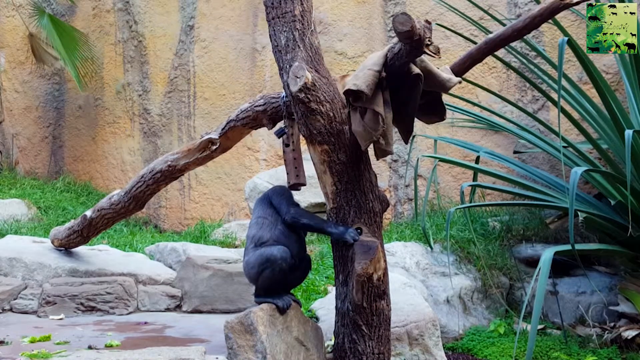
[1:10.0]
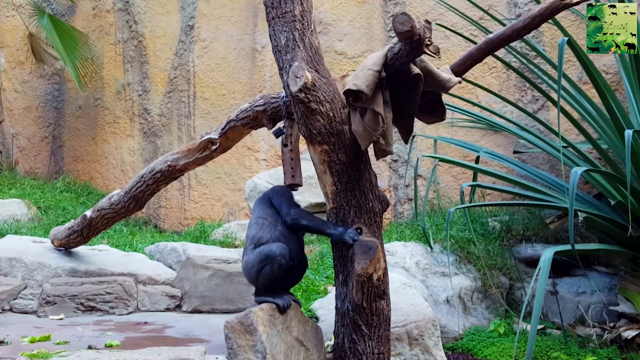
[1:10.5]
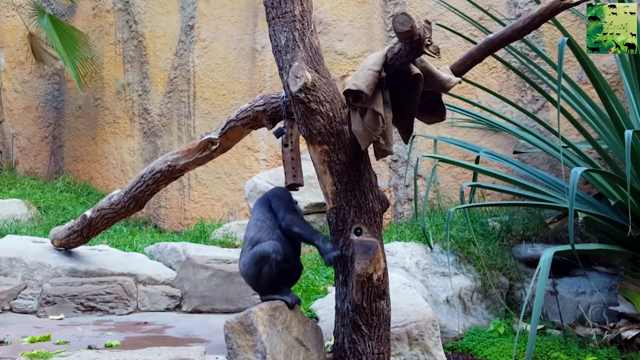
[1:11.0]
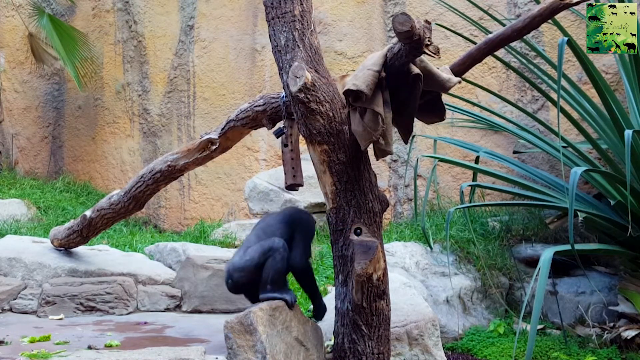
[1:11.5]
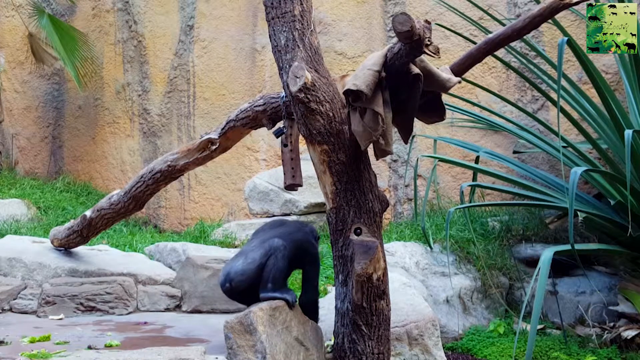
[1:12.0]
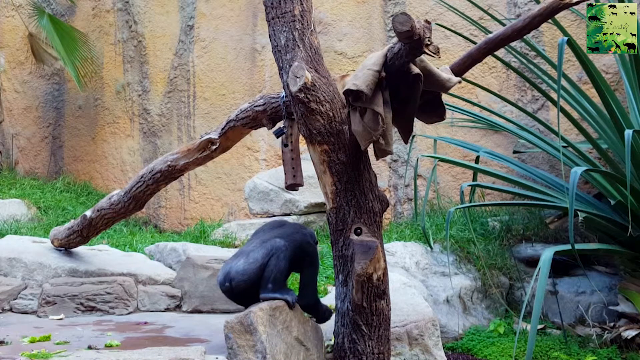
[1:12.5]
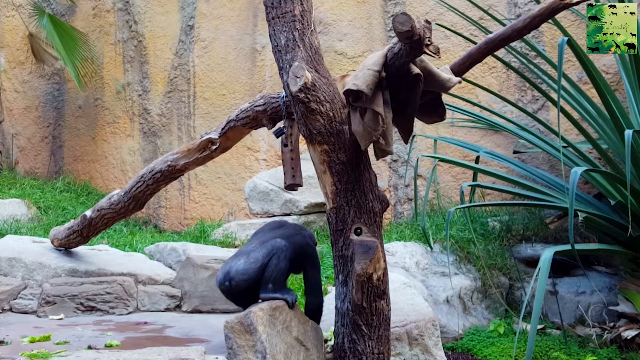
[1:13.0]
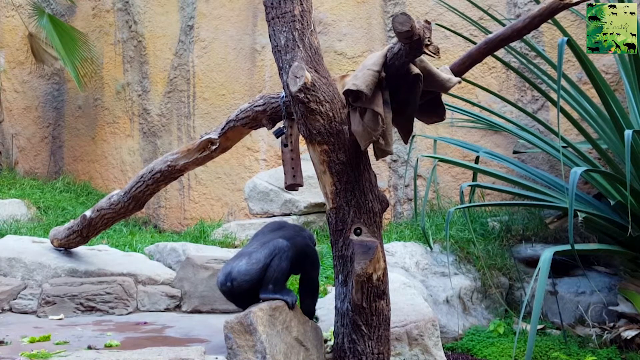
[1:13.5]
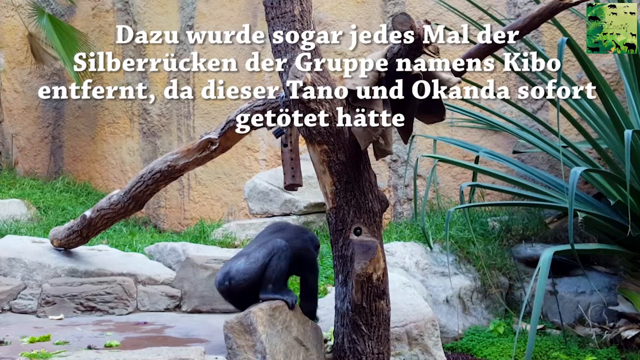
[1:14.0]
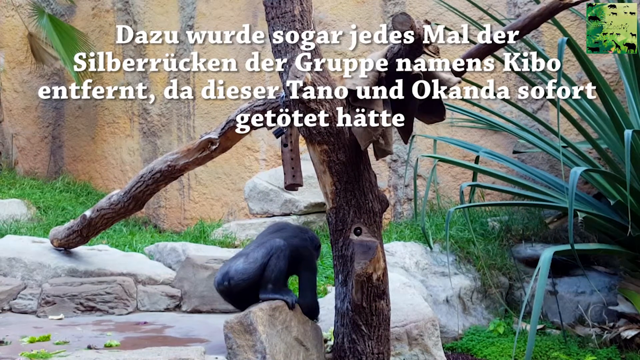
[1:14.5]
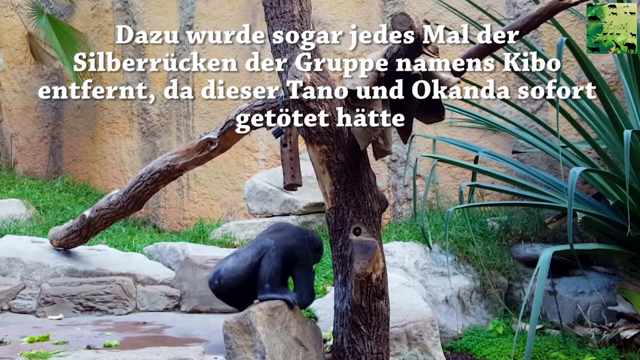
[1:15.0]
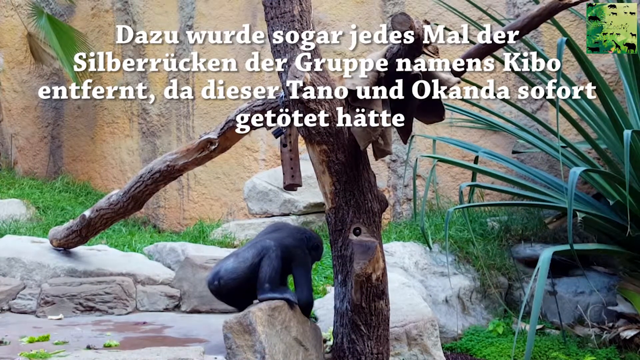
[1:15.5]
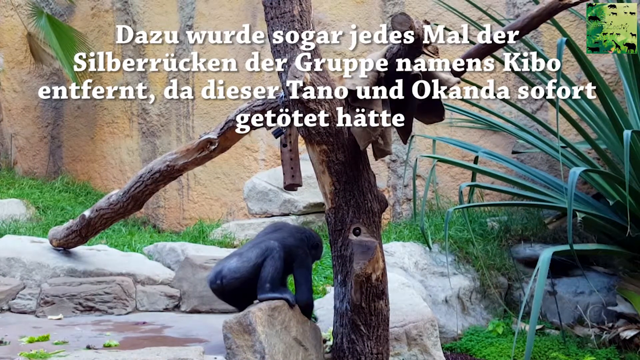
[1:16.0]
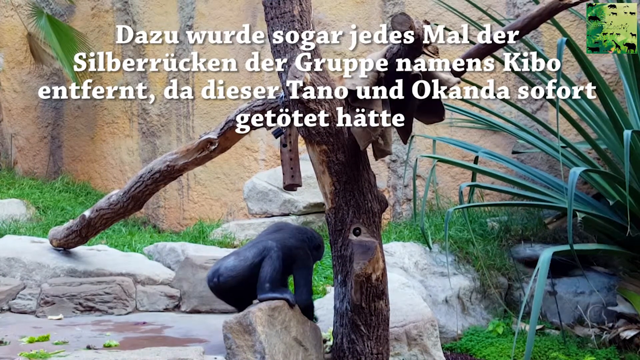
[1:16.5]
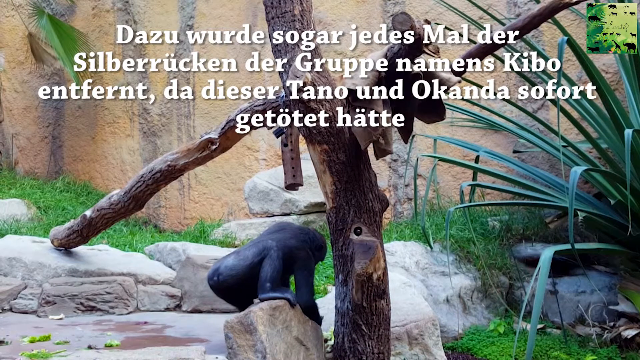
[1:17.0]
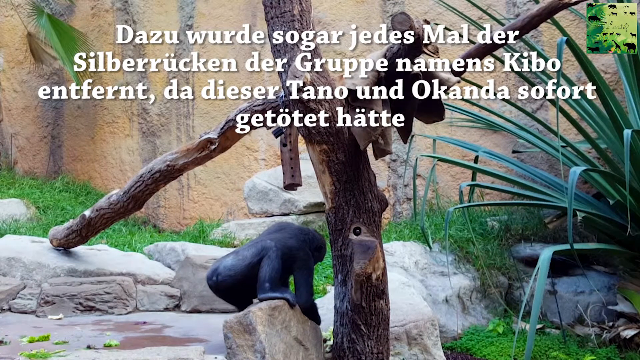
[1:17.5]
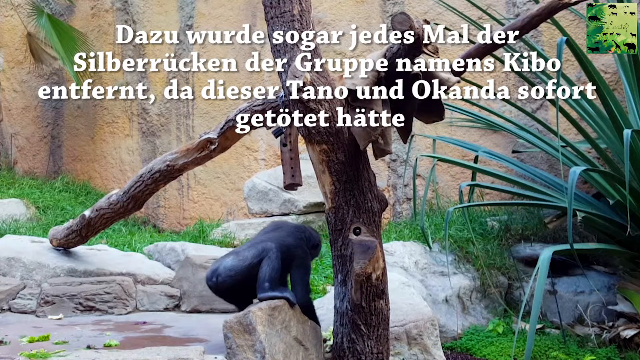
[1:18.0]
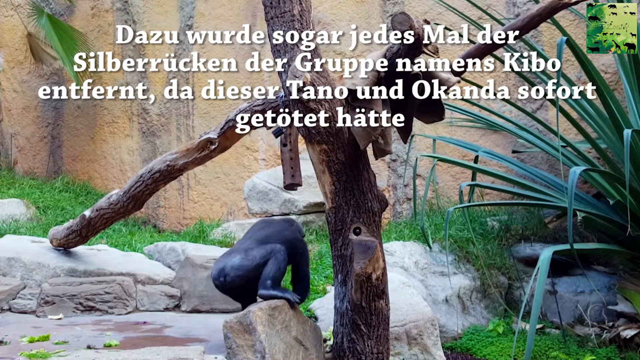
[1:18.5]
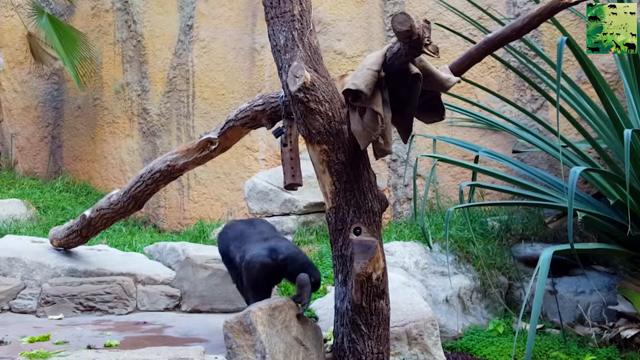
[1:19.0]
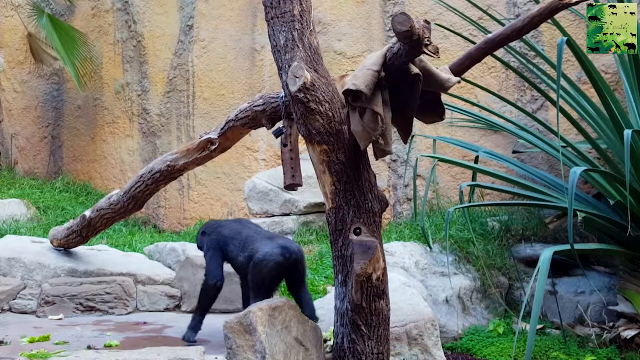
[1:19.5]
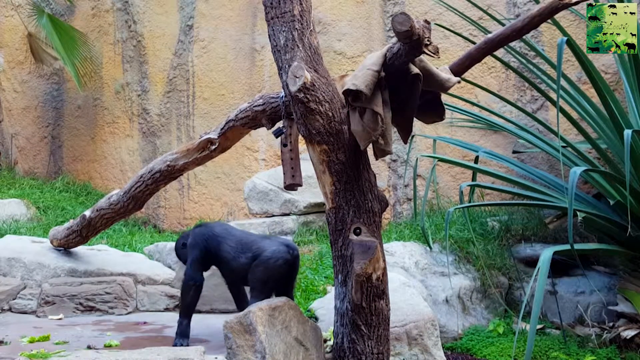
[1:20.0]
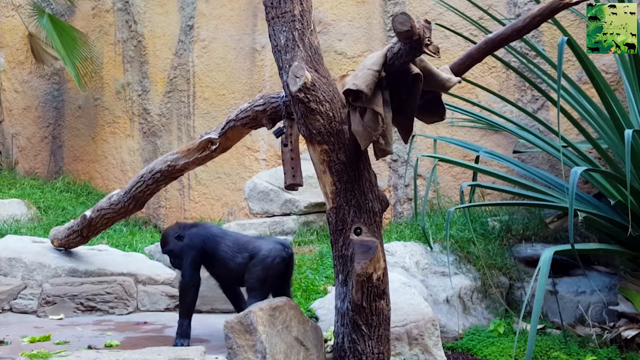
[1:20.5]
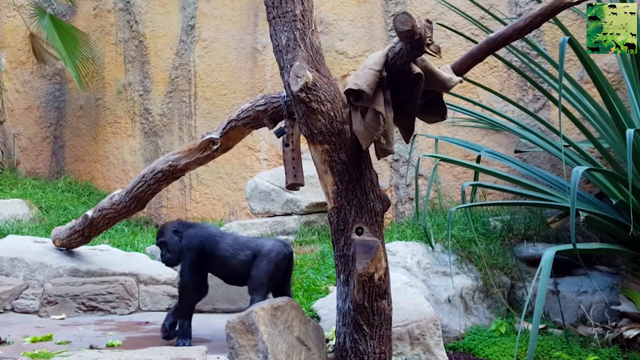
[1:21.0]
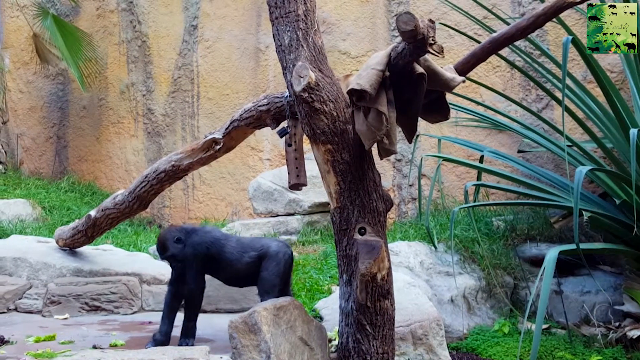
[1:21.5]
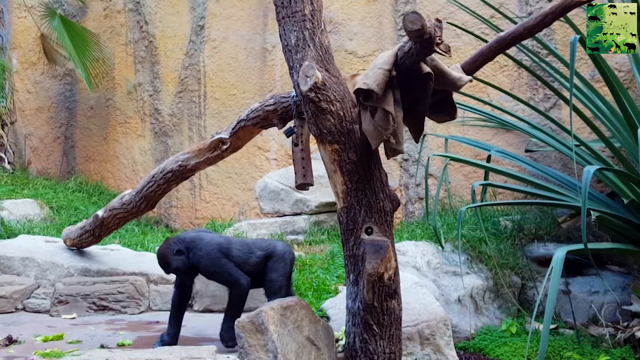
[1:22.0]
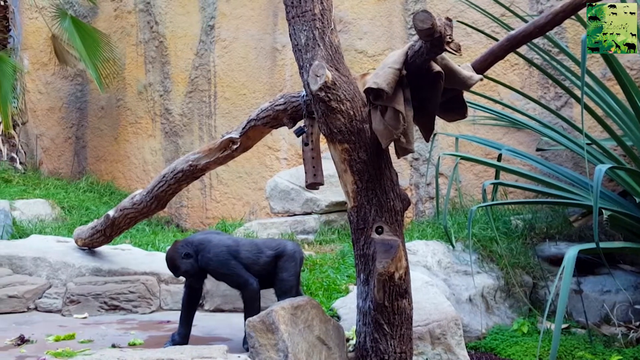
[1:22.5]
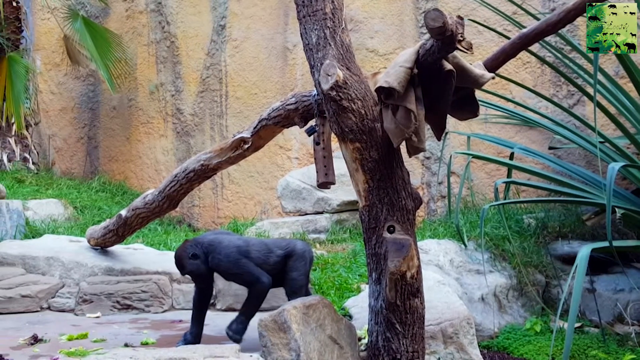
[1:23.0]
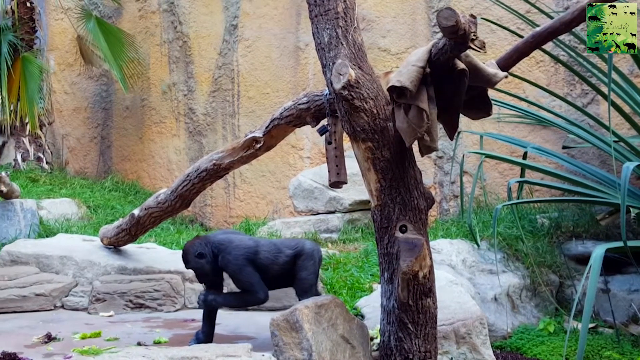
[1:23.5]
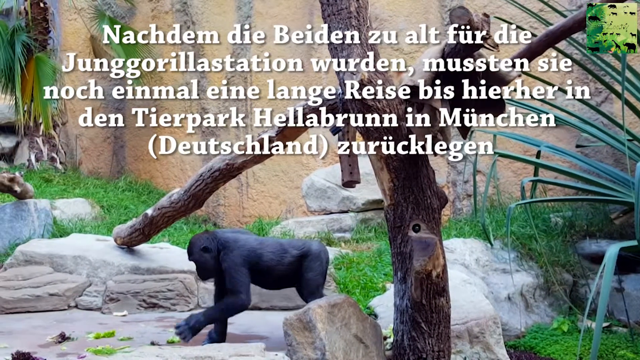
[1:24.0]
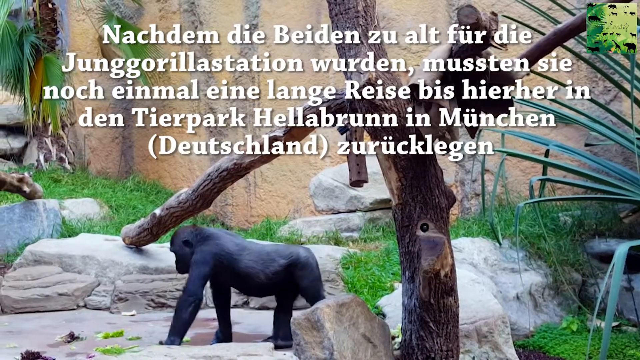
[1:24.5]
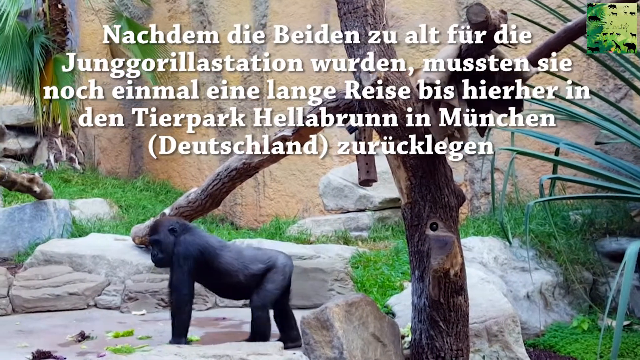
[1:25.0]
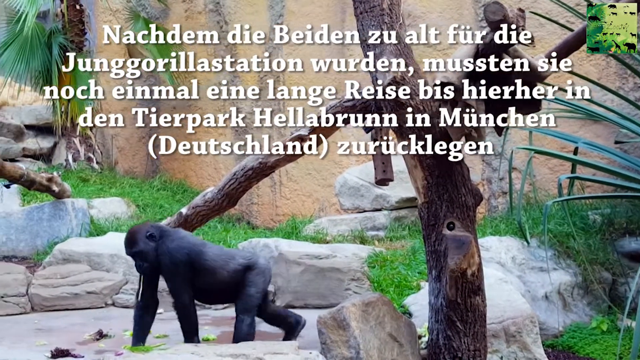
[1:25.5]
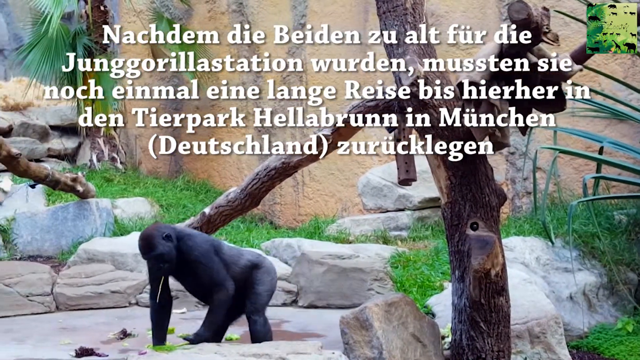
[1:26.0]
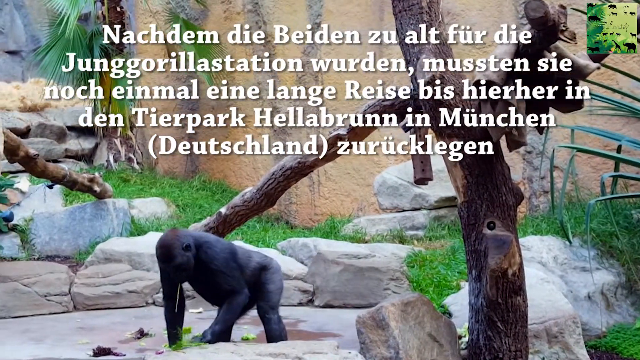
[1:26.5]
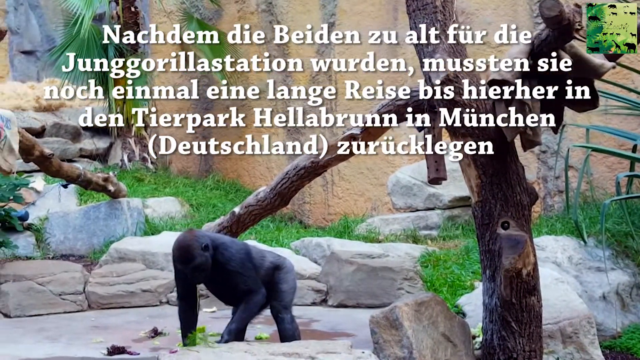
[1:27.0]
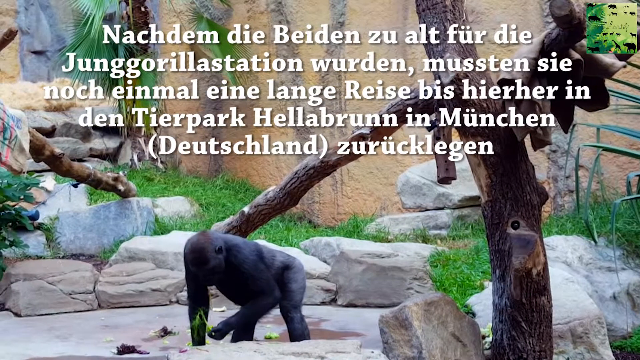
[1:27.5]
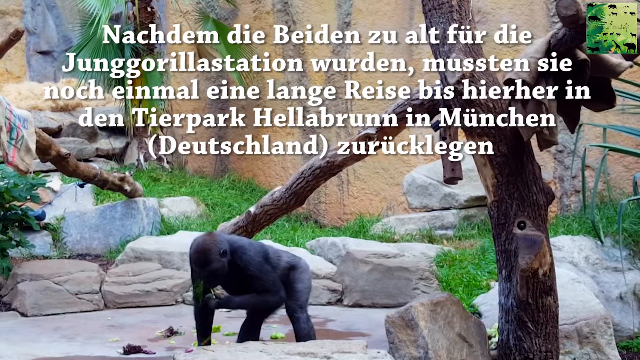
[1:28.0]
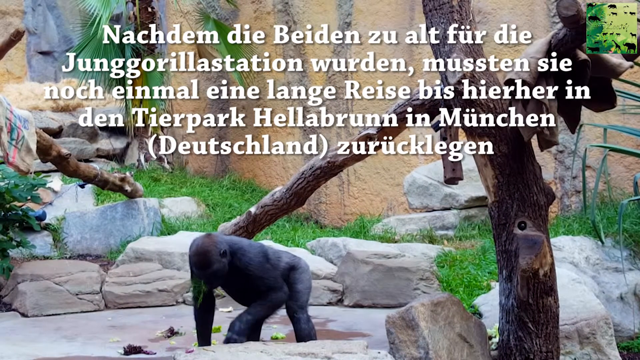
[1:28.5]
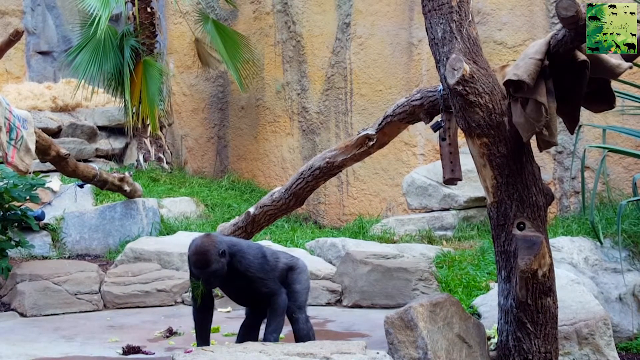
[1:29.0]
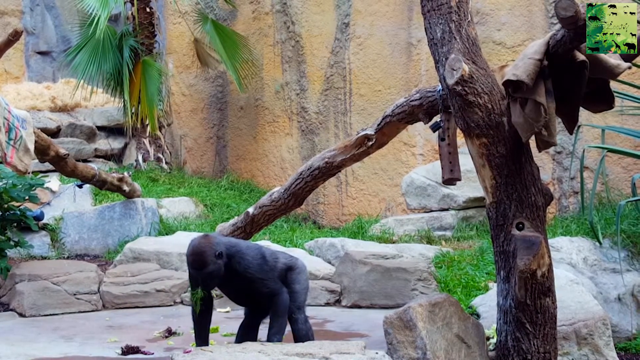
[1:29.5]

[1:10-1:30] The monkey has been standing on this rock the whole time while working with the pieces of wood. Its attention seems to have been caught by some sort of vegetation or insect life that it is eating: it picks something off the ground and transfers it into its mouth. Behind it are several remnants of what looks like food, and the monkey begins to turn around to face them. They are in a flat concrete area in the center of the rocks and boulders. There is some wetness on the concrete, with a pinkish-red color, along with what look like various peels, and something purple toward the left side. The monkey walks on all fours toward the pieces and begins putting some in its mouth and eating them; they are kind of fronds that look like they might be carrot tops. The camera's perspective moves with the monkey toward the left side, giving a somewhat different look into the habitat.